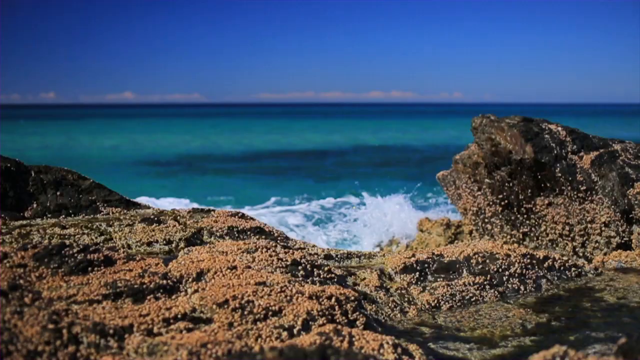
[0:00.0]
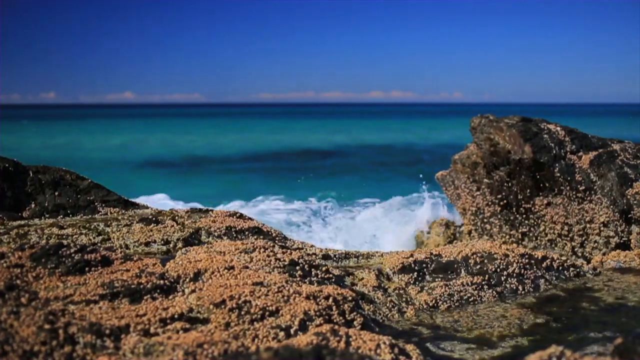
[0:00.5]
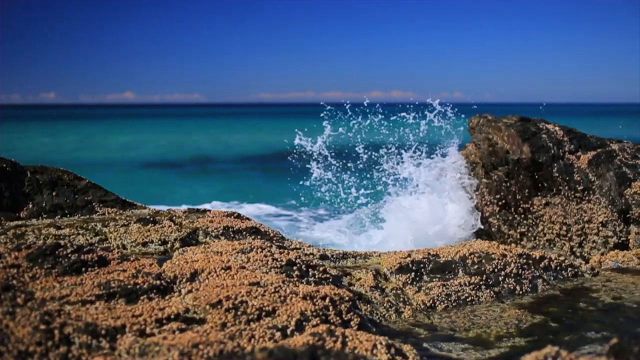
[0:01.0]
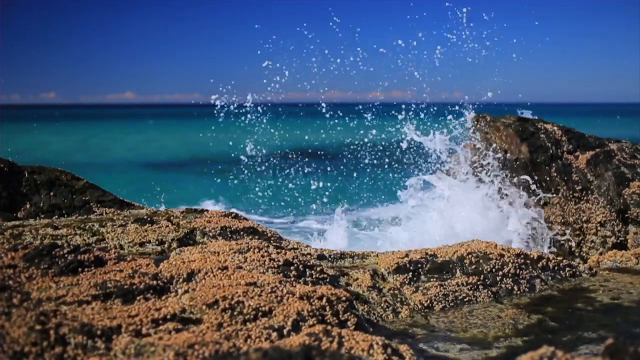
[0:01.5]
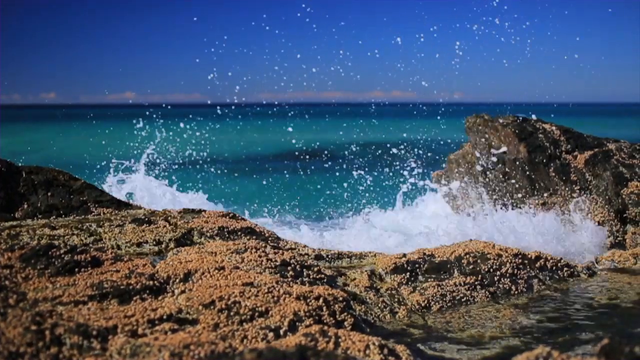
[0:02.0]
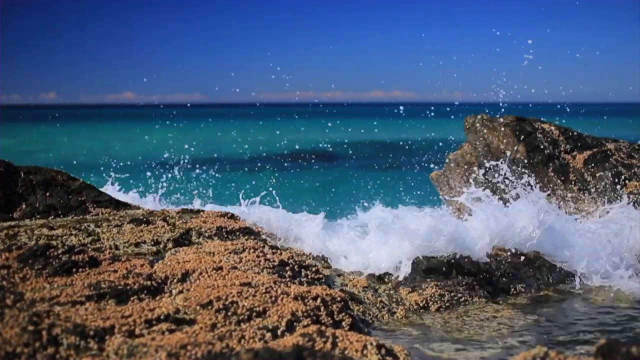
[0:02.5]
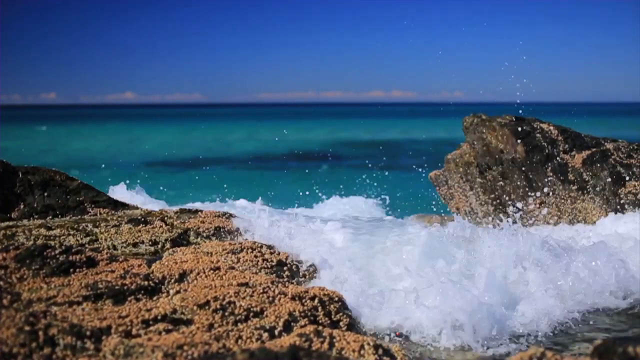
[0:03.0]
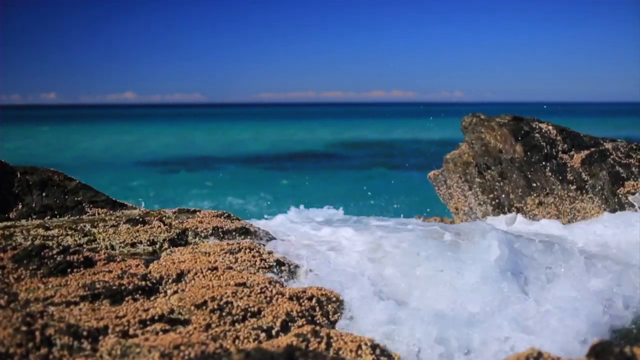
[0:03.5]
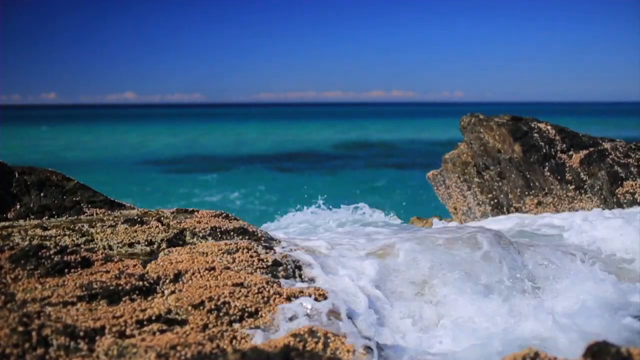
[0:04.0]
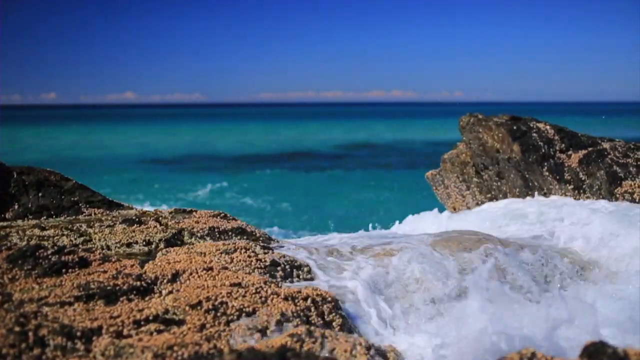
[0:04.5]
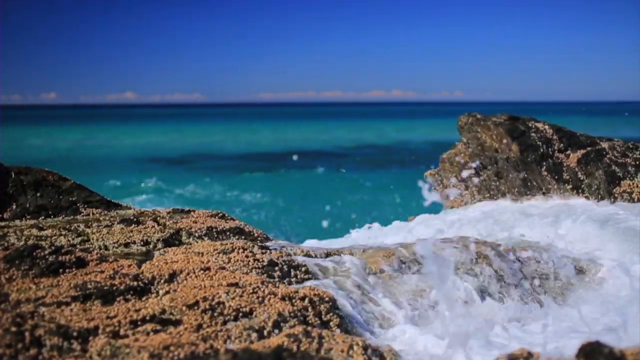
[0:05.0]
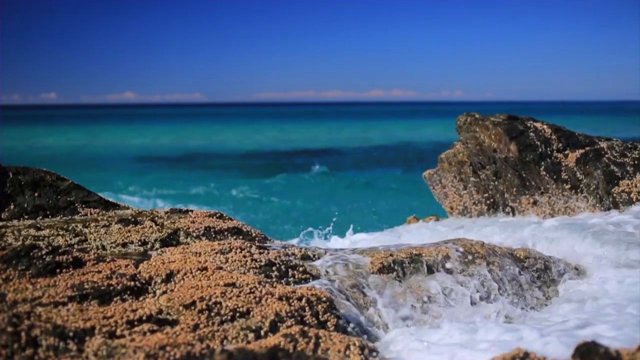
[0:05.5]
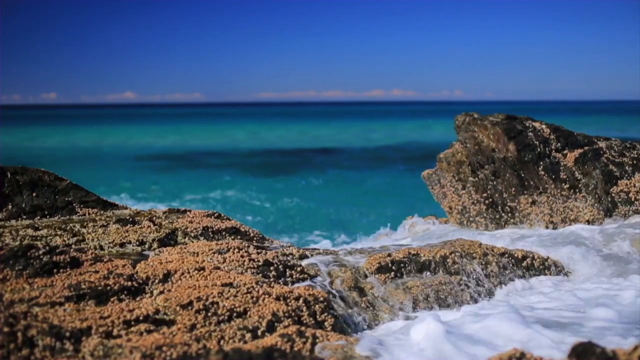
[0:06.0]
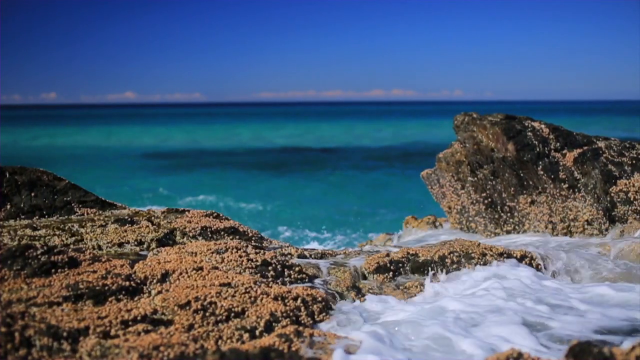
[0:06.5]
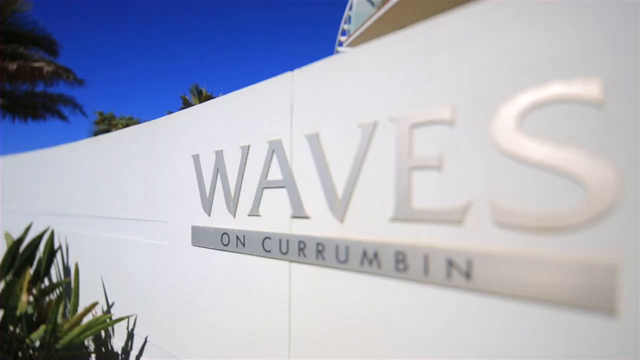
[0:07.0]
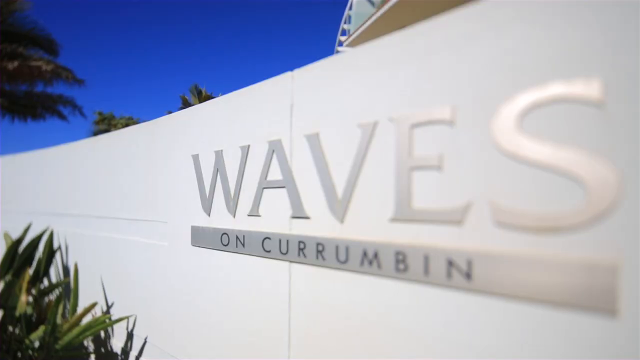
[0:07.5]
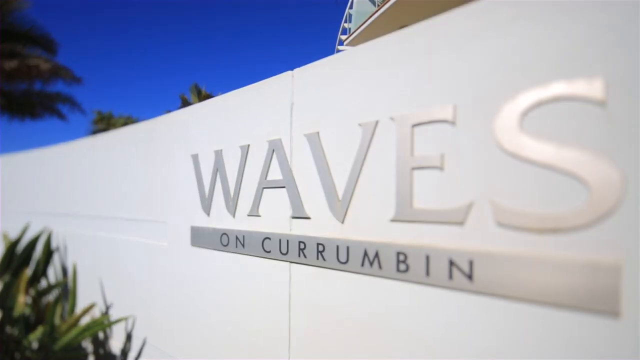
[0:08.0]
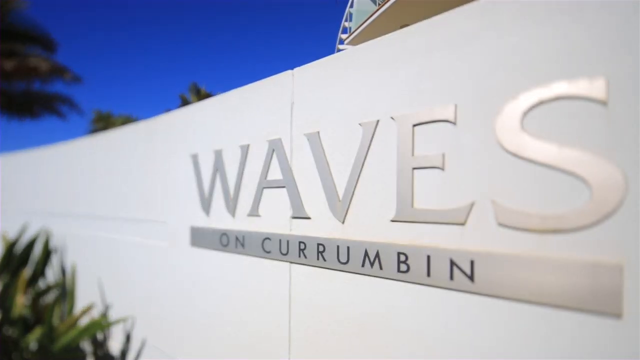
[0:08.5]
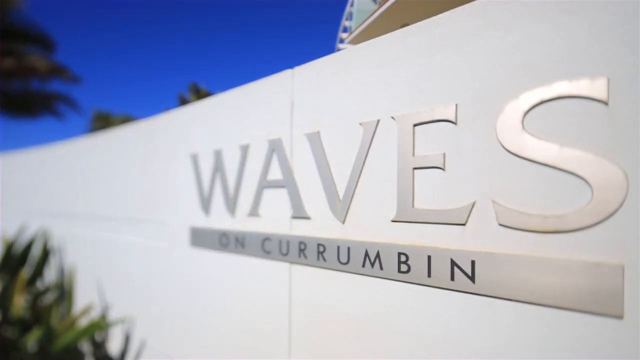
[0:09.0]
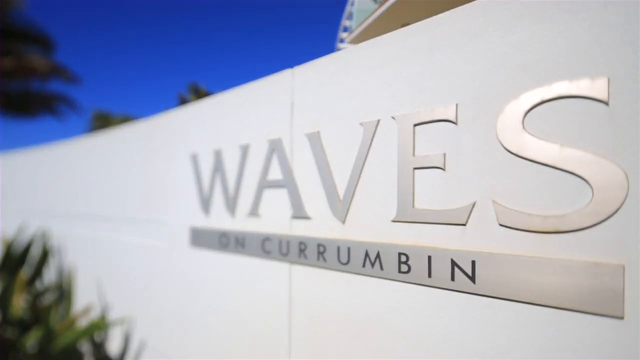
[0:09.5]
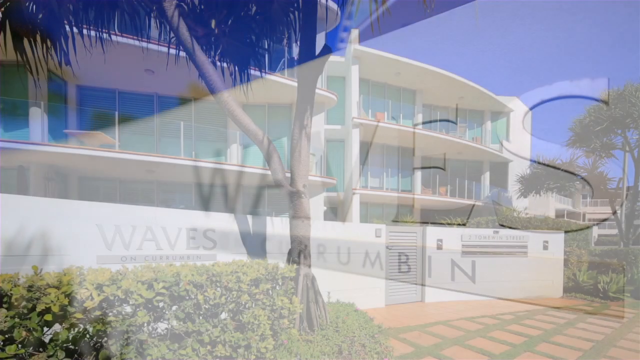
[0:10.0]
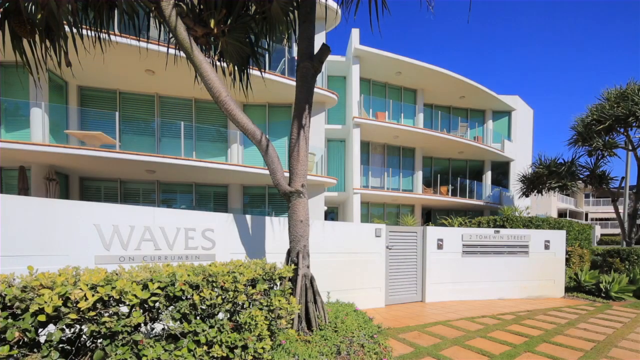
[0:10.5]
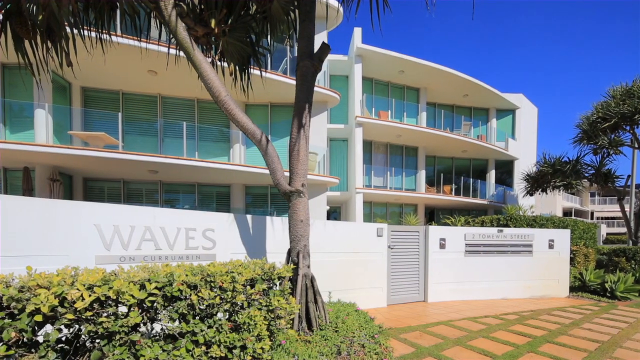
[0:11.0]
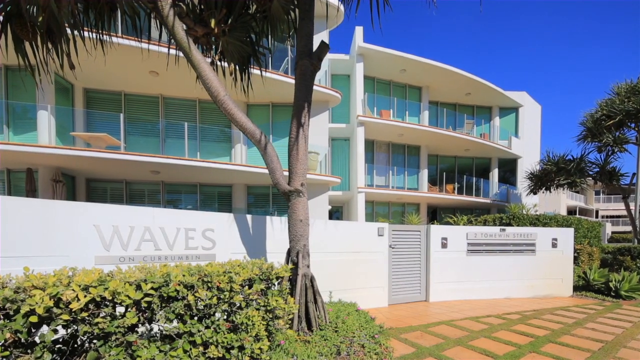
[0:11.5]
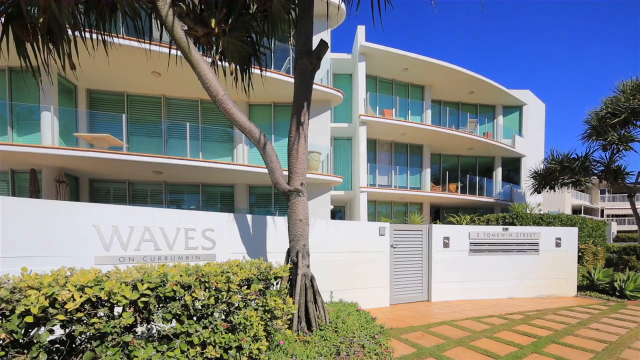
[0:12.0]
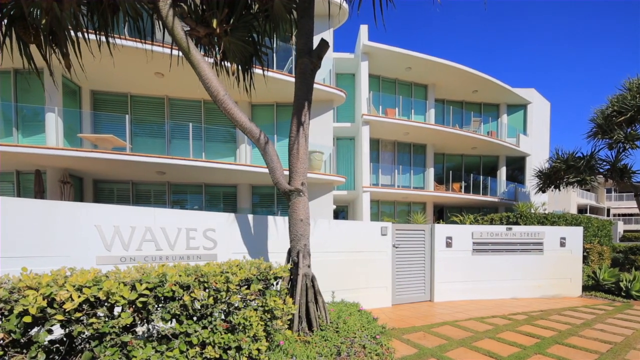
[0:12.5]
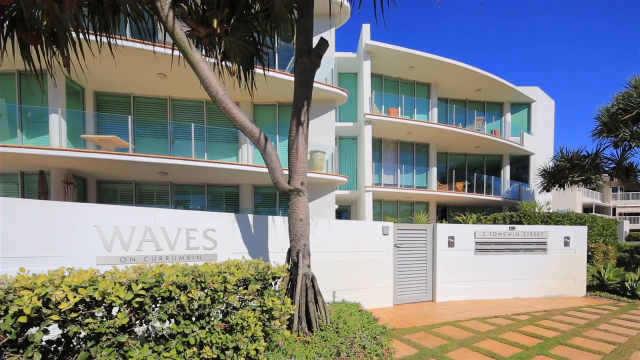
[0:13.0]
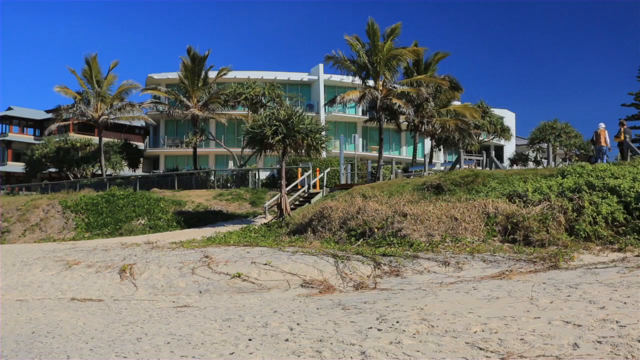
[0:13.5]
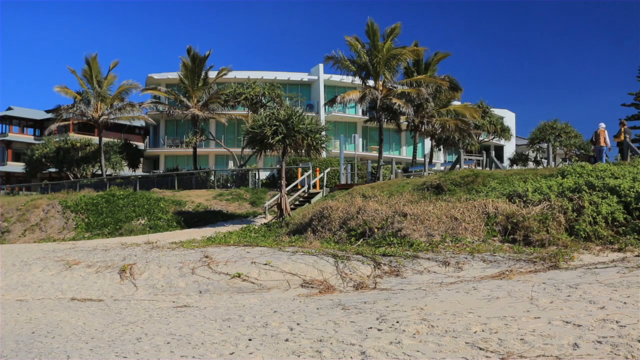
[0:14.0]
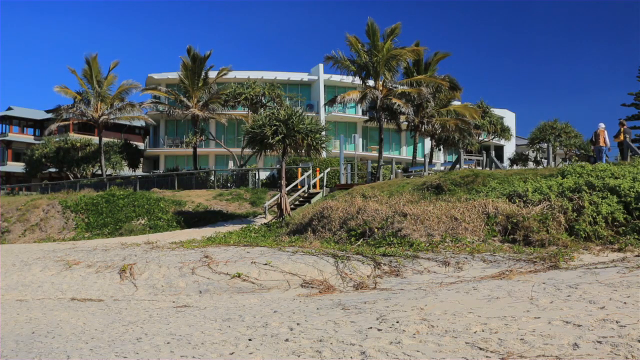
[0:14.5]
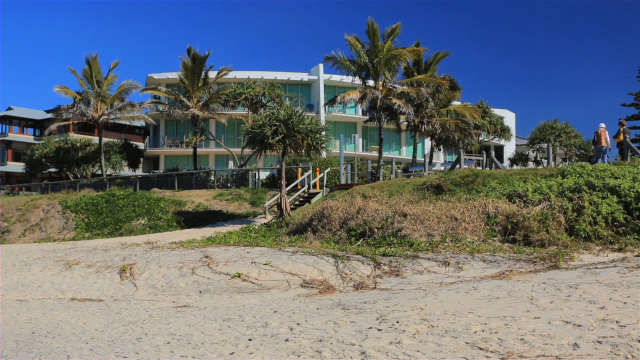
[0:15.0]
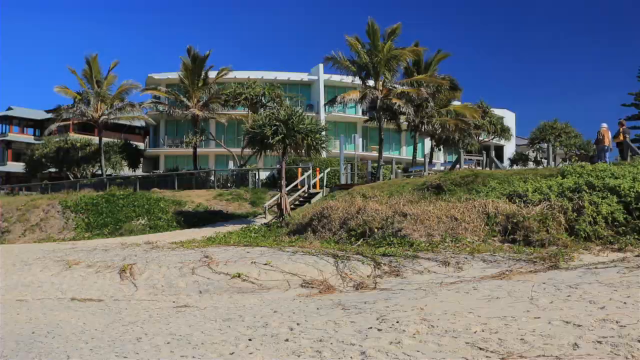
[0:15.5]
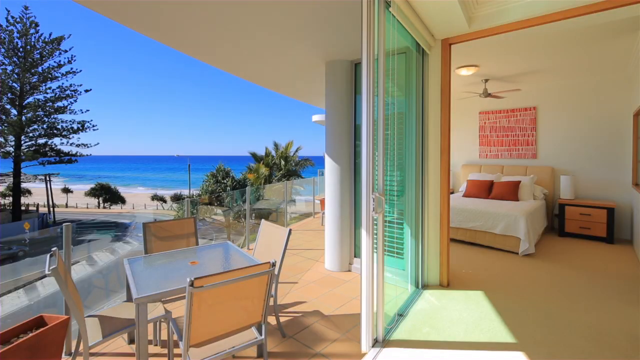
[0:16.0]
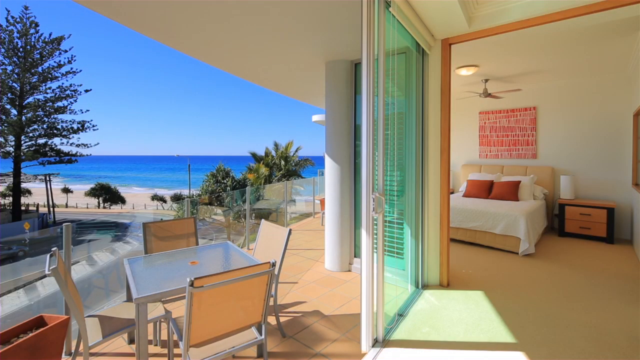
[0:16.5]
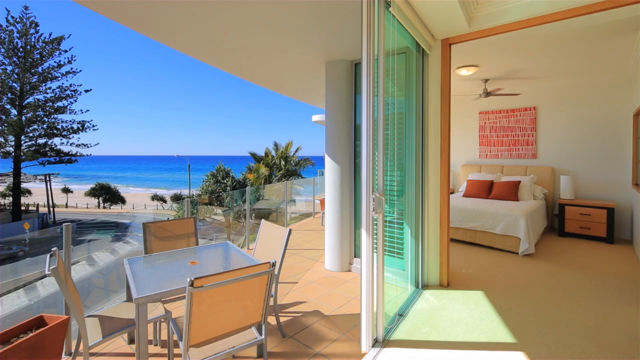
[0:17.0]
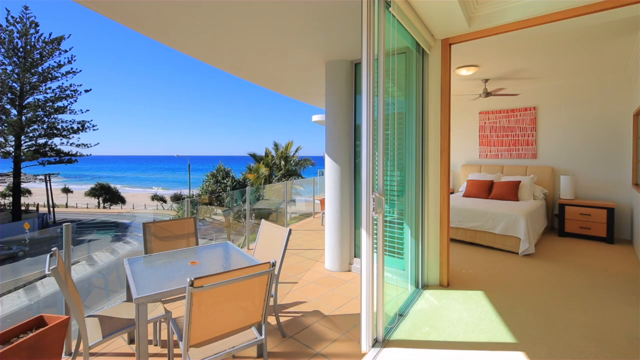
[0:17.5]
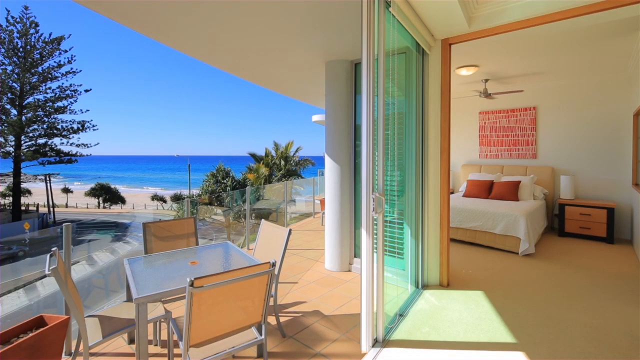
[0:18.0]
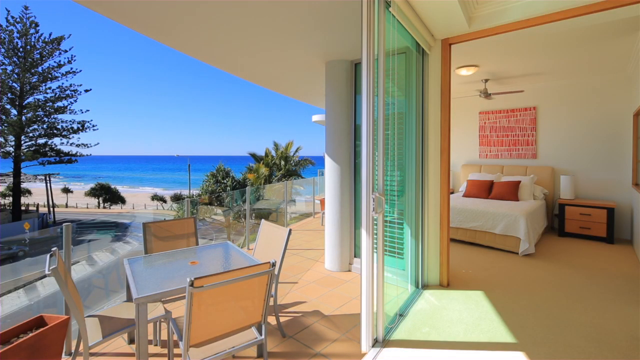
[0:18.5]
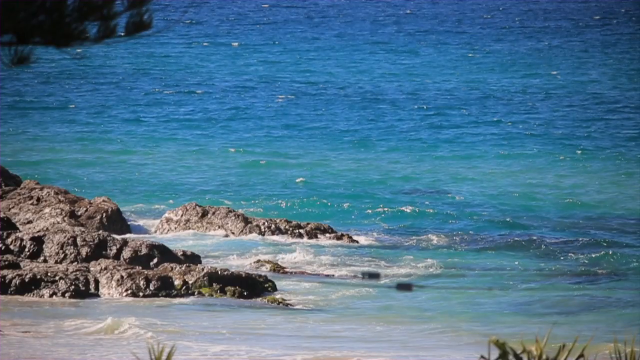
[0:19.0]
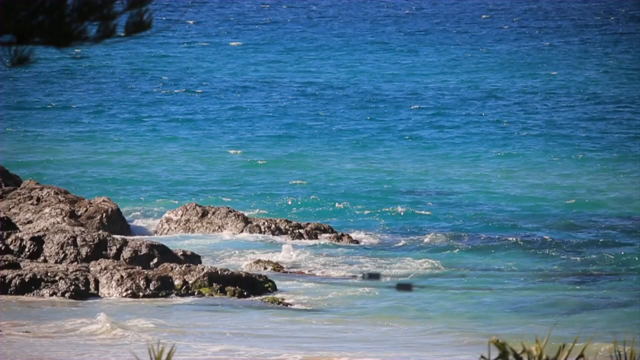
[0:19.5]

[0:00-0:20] A wave splashes onto rocks in the foreground. Behind it is all ocean, ranging from a very deep blue to a lighter blue. Some clouds are visible far off in the distance, only along the water, and the rest of the sky is a clear but dark blue. The scene changes to a hotel, or possibly apartments, with a wall bearing the name "Waves on Currumbin." Next is the front of the hotel or location: a door that looks locked to keep others away, three stories, and four balconies, two on the left and two on the right. A view from the beach, from the sand, follows, showing a little hill with some grass and two people off to the right side standing around. Palm trees are covering the hotel in the background. A very short shot shows the inside of one of the bedrooms from the balcony, with the sliding doors open; the bedroom and bed are visible, along with a table on the balcony with a view of the beach. Finally, small beach waves splash on some rocks, much smaller than the huge wave at the beginning.